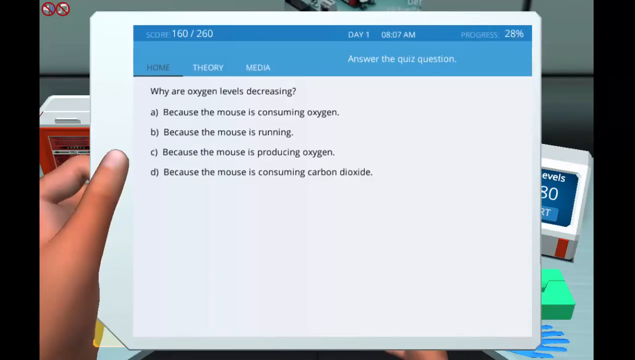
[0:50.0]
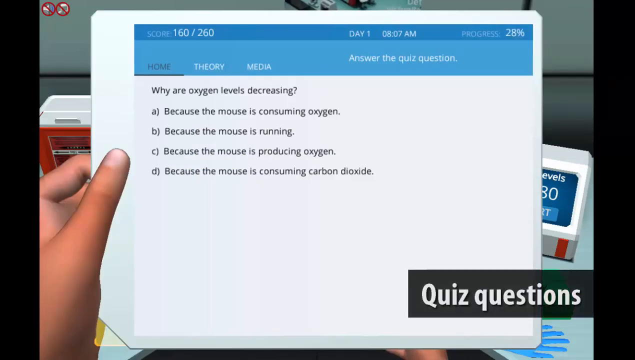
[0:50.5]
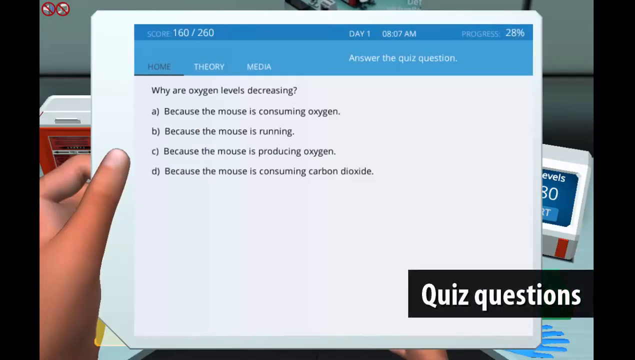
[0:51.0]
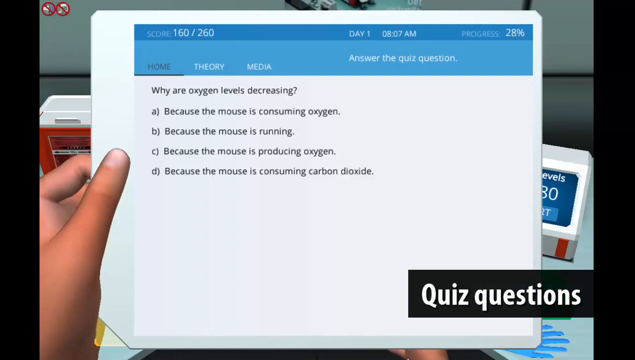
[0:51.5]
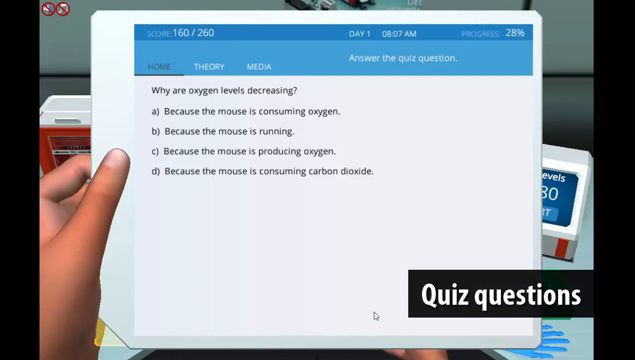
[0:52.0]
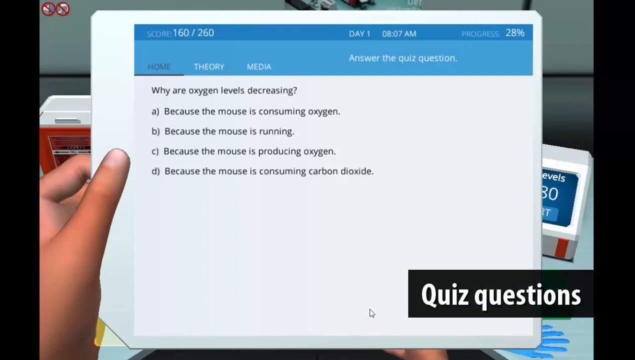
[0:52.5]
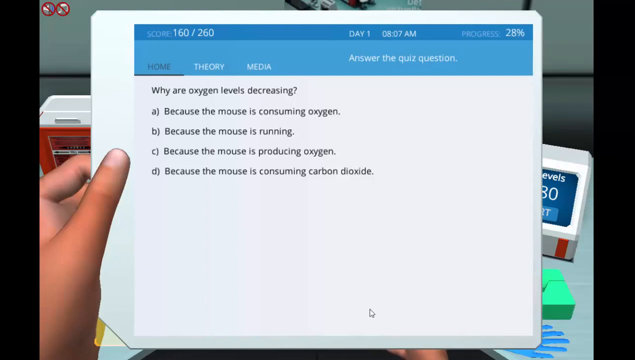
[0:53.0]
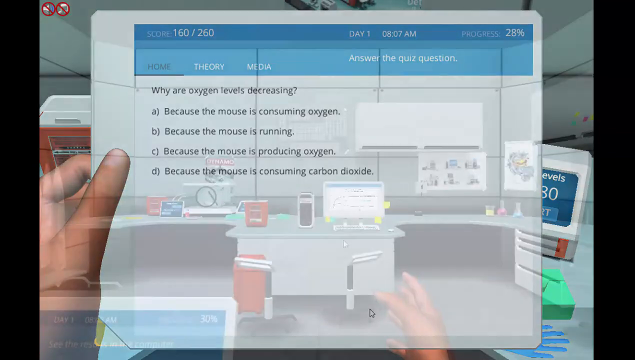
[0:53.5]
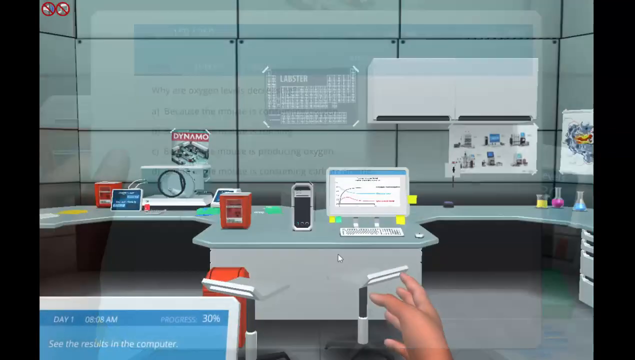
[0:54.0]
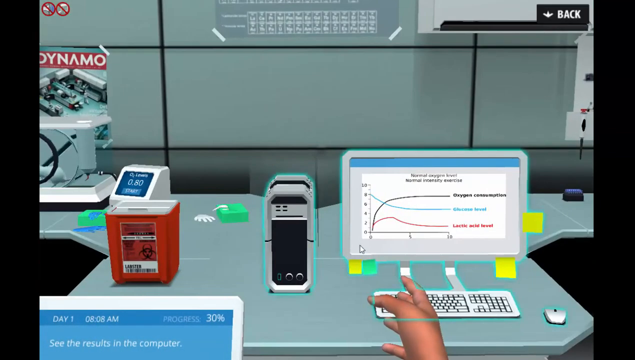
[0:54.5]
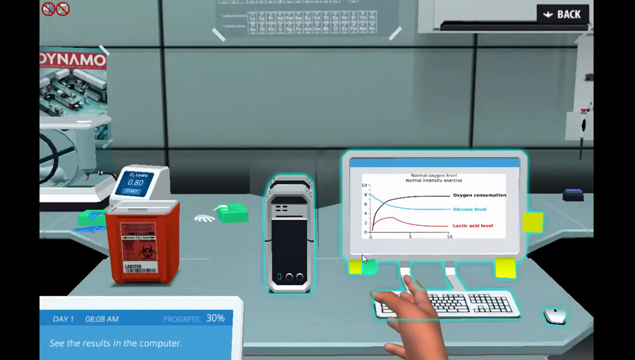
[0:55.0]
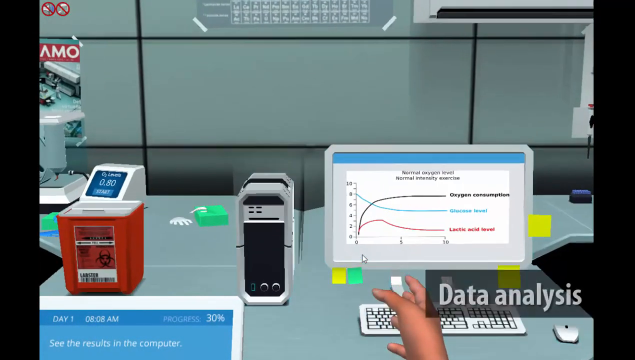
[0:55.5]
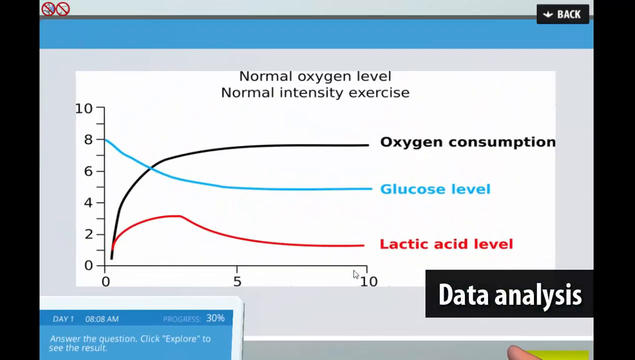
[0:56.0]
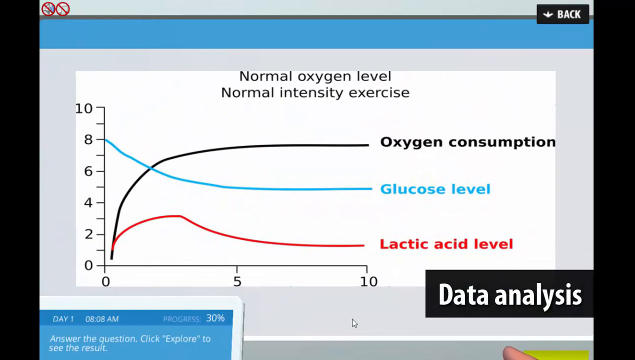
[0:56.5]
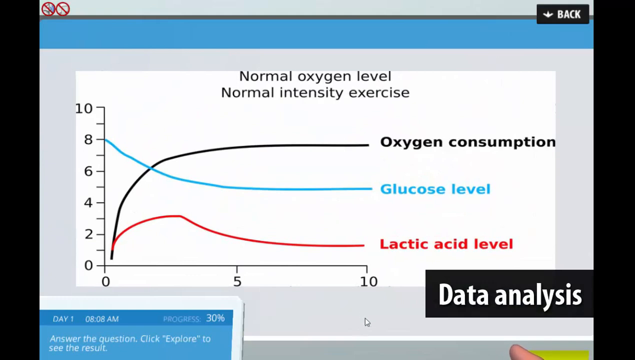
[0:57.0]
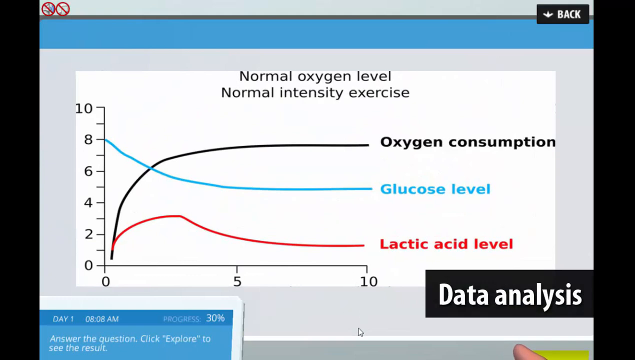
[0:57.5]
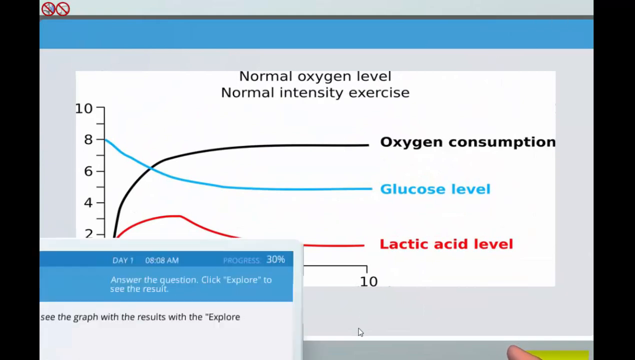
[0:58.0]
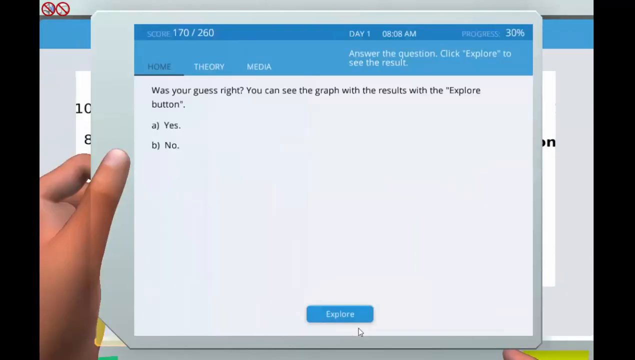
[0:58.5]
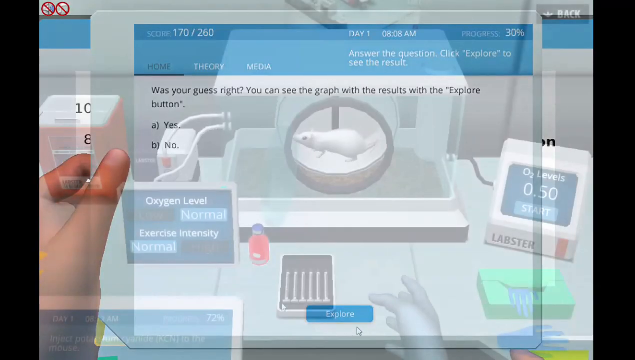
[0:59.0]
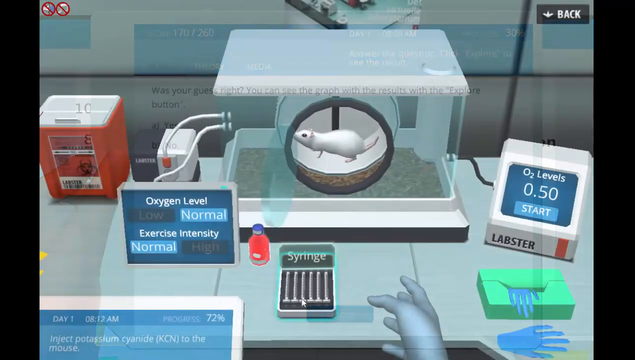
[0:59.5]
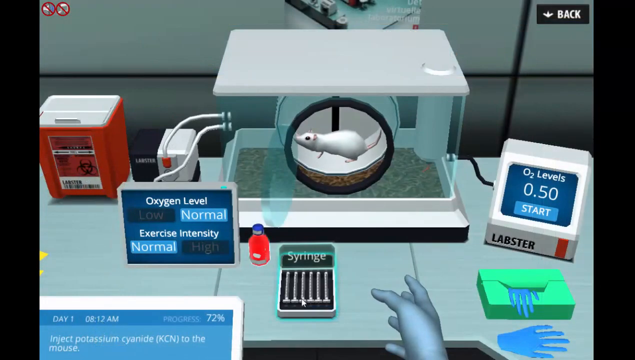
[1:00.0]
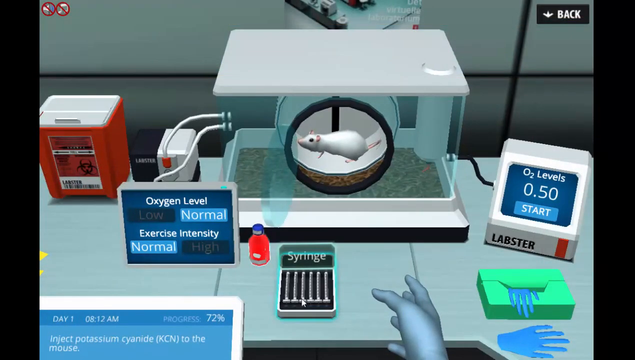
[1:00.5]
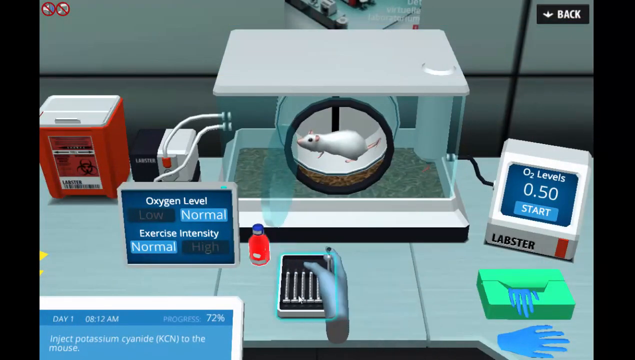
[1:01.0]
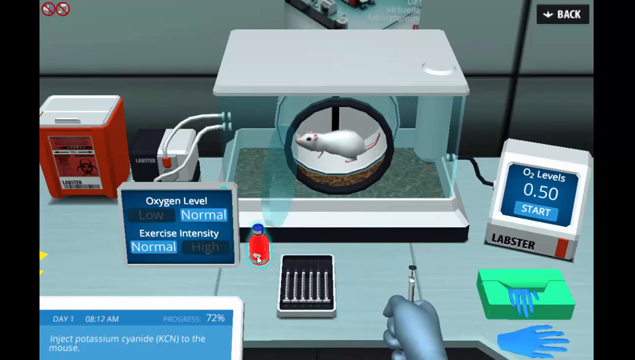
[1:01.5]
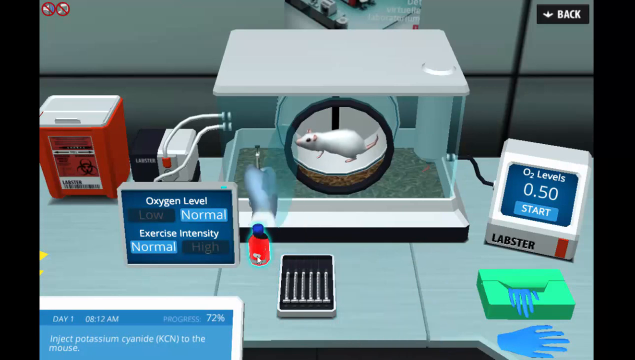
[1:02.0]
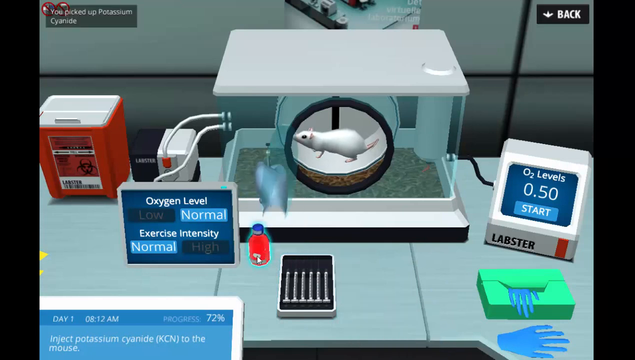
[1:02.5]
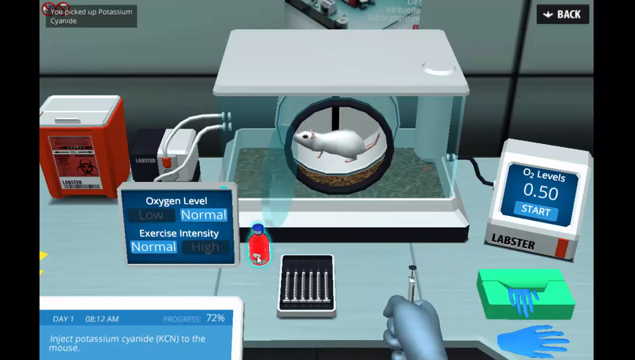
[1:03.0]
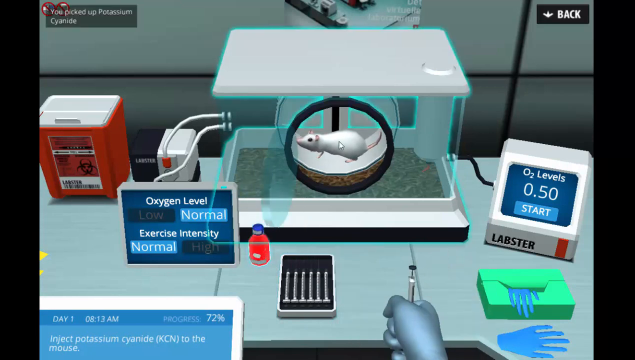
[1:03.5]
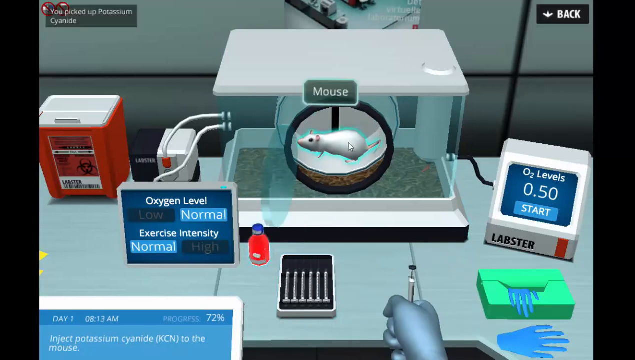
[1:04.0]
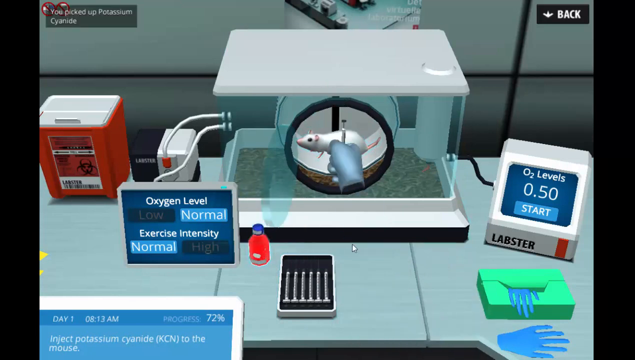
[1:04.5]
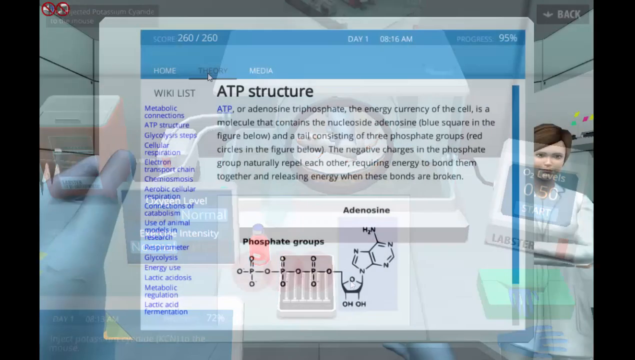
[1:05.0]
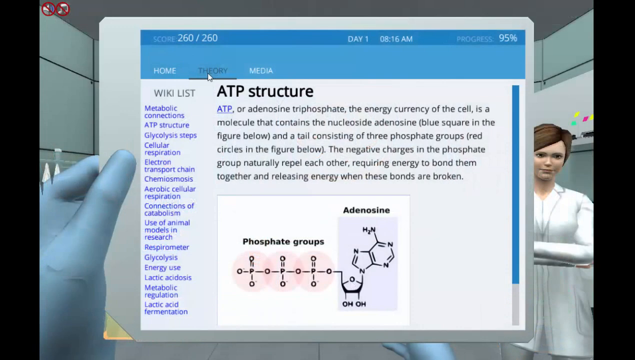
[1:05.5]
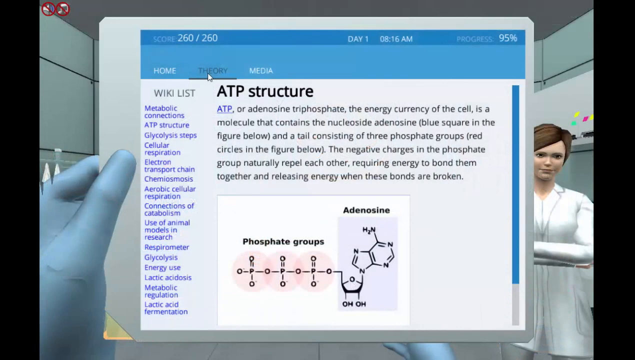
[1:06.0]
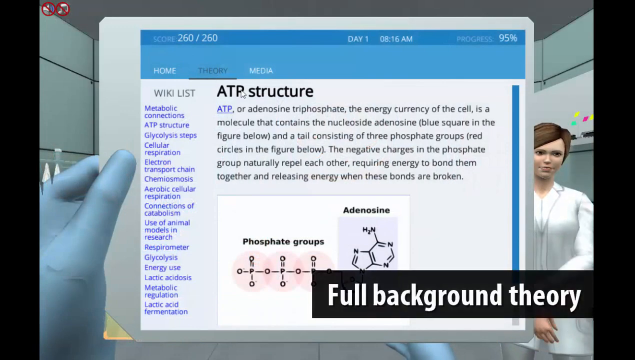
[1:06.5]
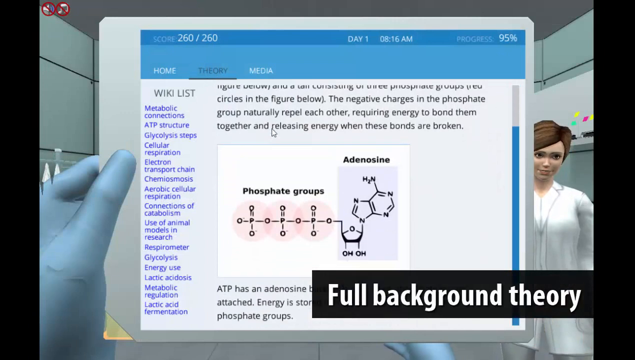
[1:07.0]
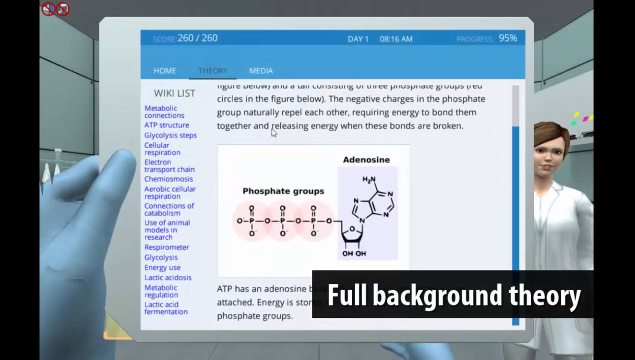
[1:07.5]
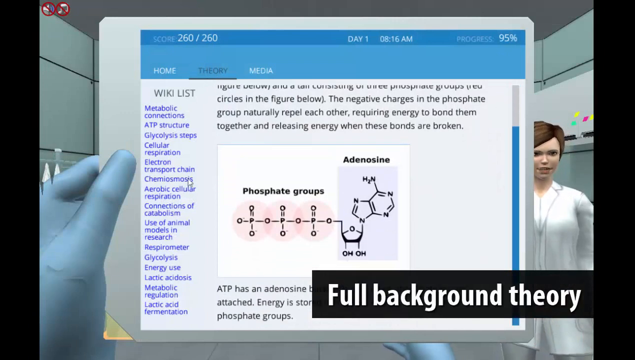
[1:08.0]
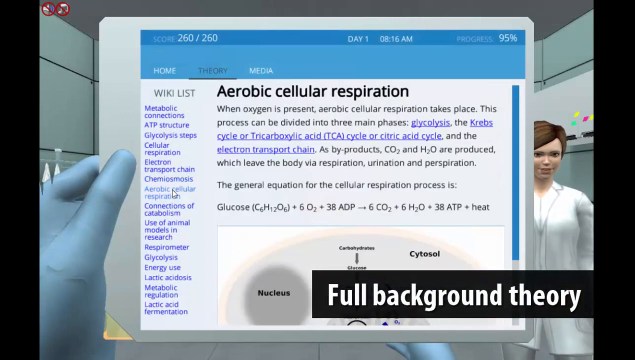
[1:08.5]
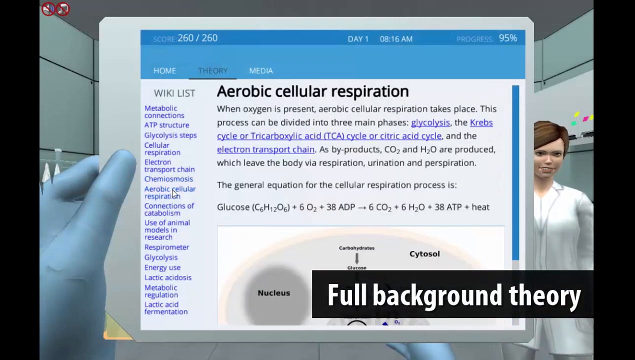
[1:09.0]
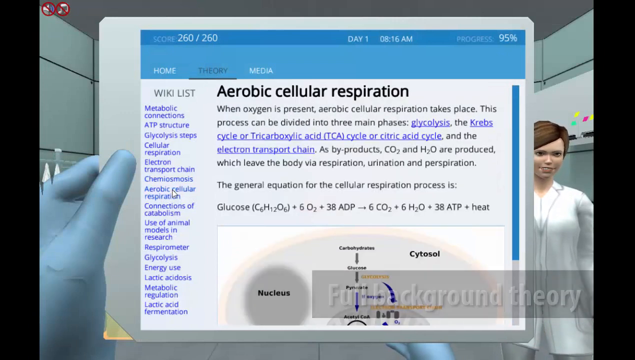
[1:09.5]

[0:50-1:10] A digital image shows a white piece of paper held by a hand, with just the thumb and index finger visible. At the very top it says "why are oxygen levels decreasing", and underneath, one below the other: "A because the mouse is consuming oxygen", "B because the mouse is running", "C because the mouse is producing oxygen" and "D because the mouse is consuming carbon dioxide". In the bottom right-hand corner, in white inside a black rectangle, it says "quiz questions". The sheet disappears, and a desk appears with a desktop computer on it, a small gray and black machine to its left, and a red bin to the left of that. The camera zooms in on the desktop screen. At the top it says "normal oxygen level, normal intensity exercise"; underneath, "oxygen consumption" with a black line going from it down onto a graph; then "glucose level" in blue with a blue line going over to the number eight on the graph; then "lactic acid level" with a red line going over to number one on the graph. In the bottom right-hand corner of the screen, in a black rectangle, it says "data analysis". Then the sheet of paper goes away, and a cage with a white rat and a hamster wheel is shown, followed by a couple of other sheets of paper.